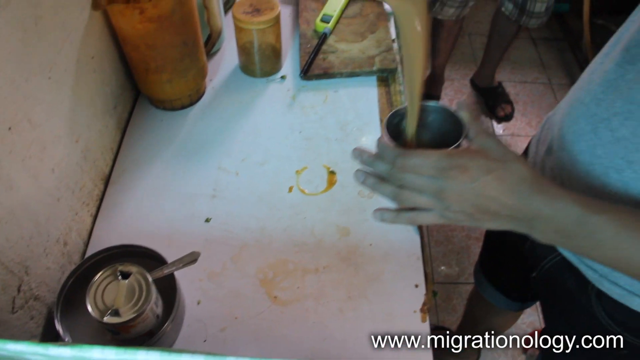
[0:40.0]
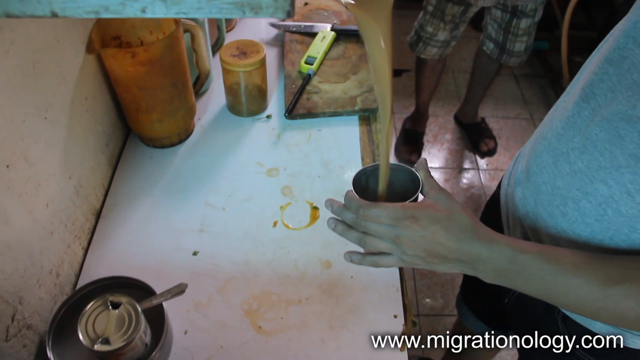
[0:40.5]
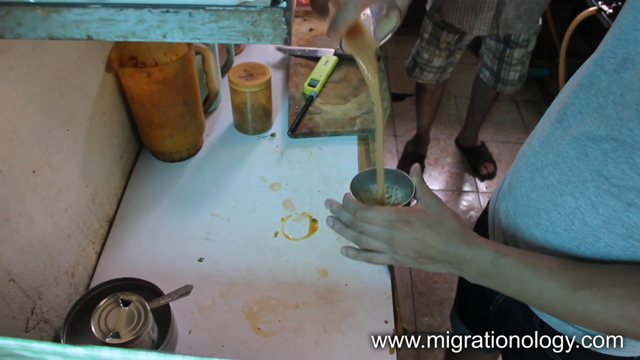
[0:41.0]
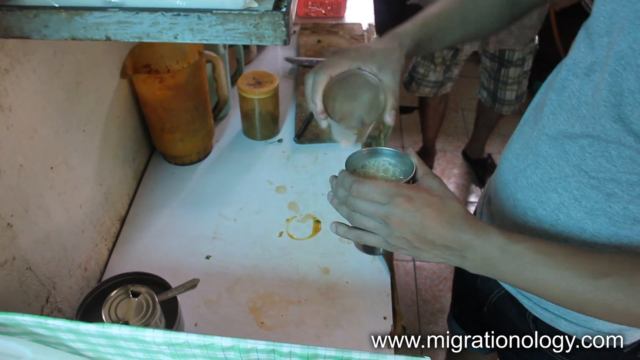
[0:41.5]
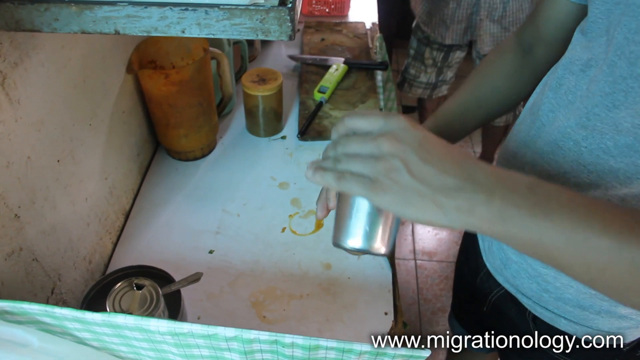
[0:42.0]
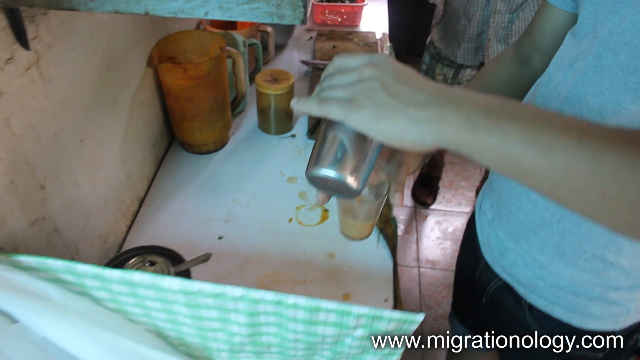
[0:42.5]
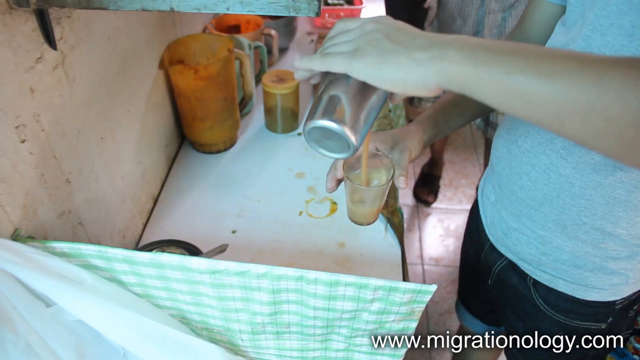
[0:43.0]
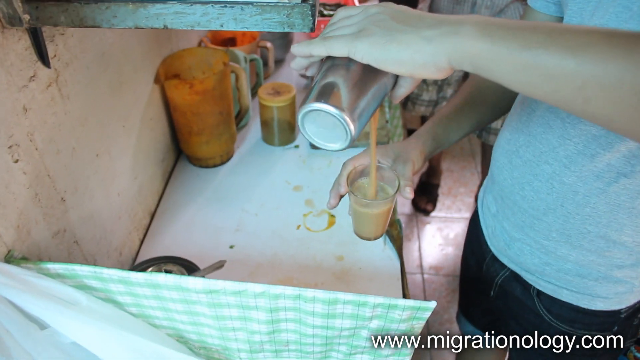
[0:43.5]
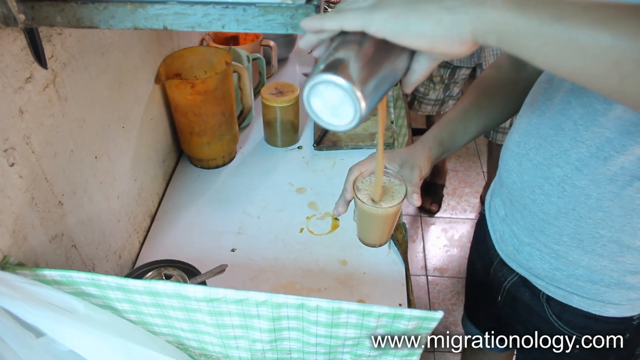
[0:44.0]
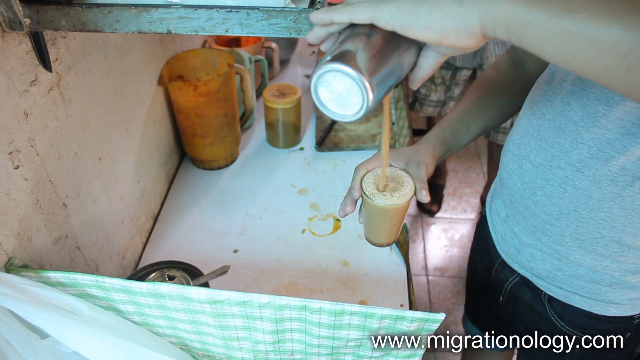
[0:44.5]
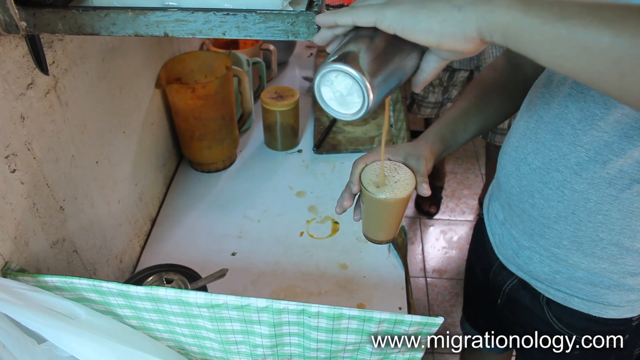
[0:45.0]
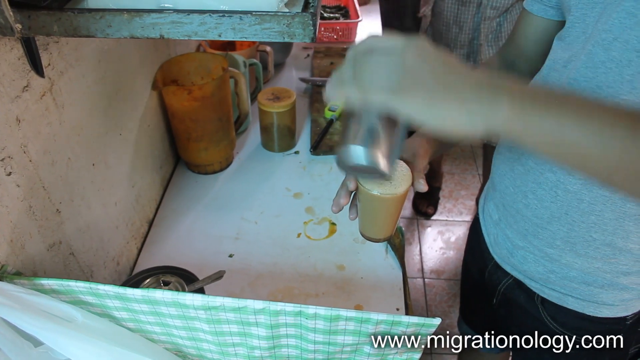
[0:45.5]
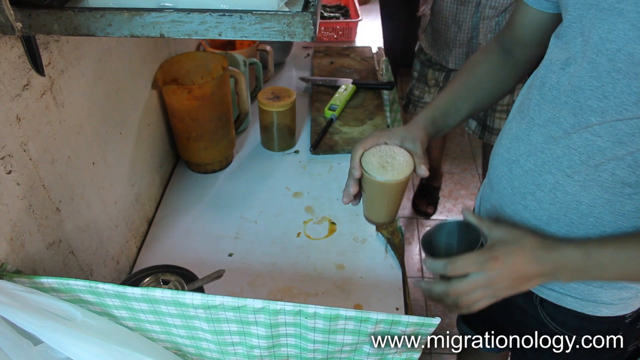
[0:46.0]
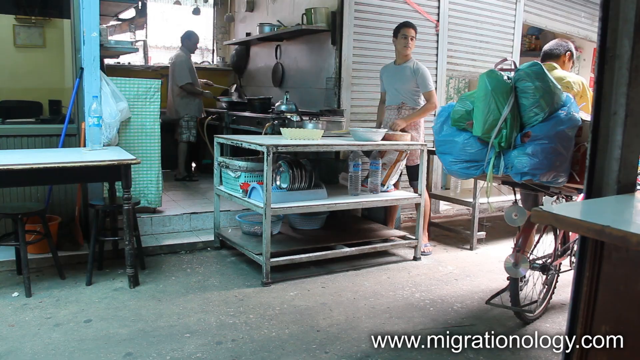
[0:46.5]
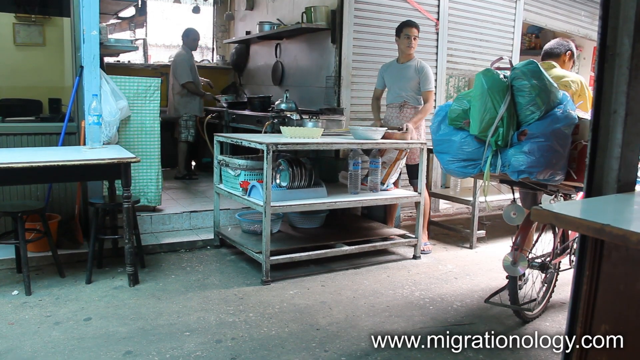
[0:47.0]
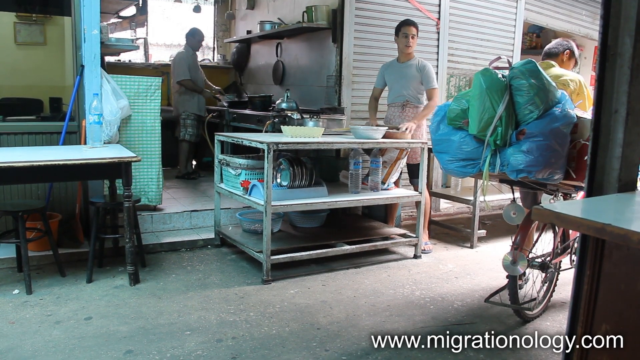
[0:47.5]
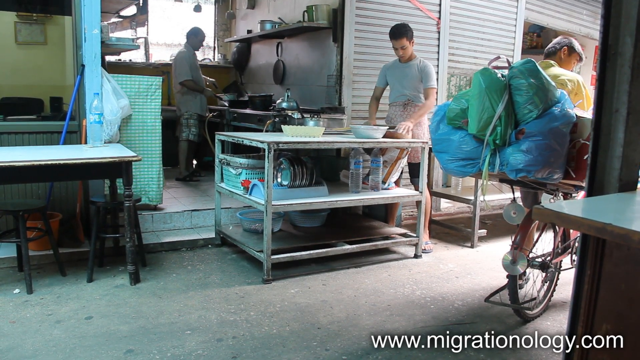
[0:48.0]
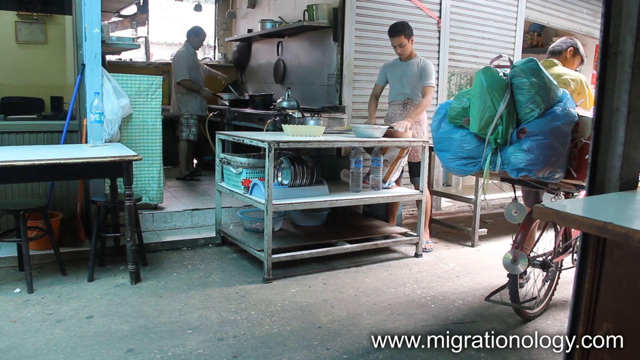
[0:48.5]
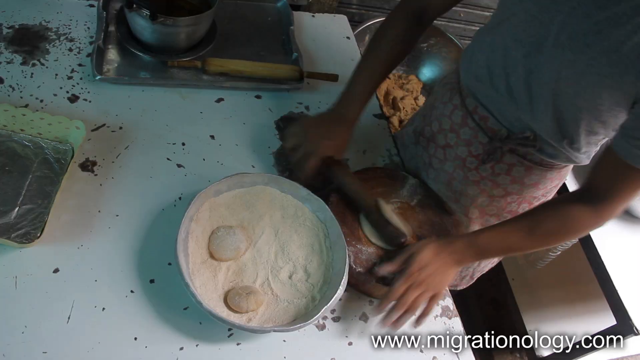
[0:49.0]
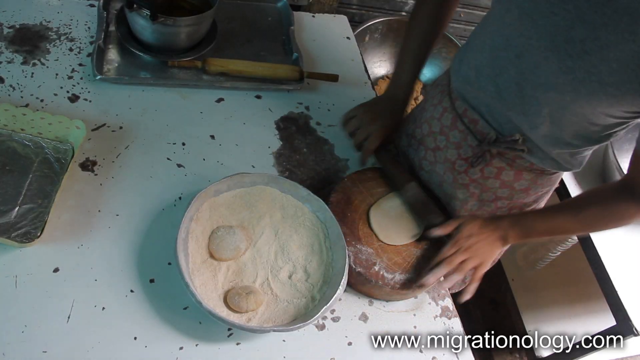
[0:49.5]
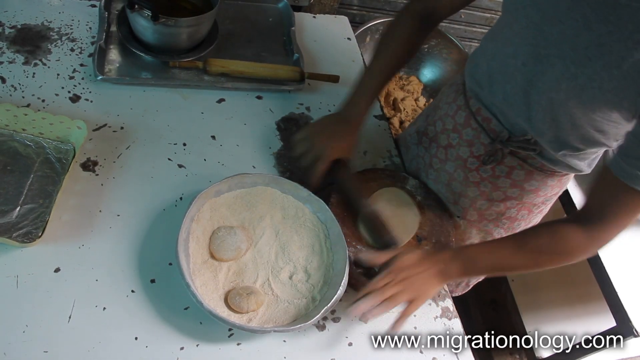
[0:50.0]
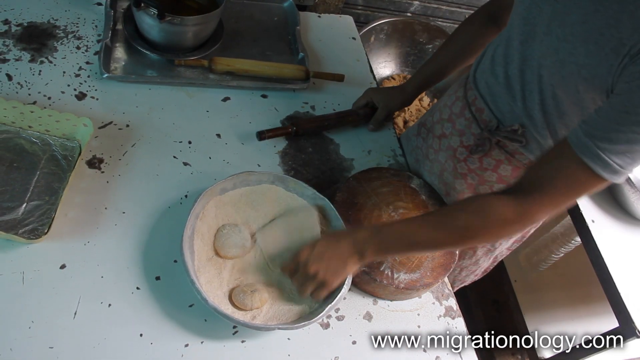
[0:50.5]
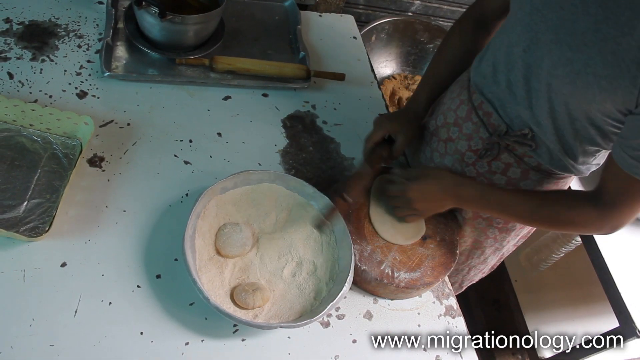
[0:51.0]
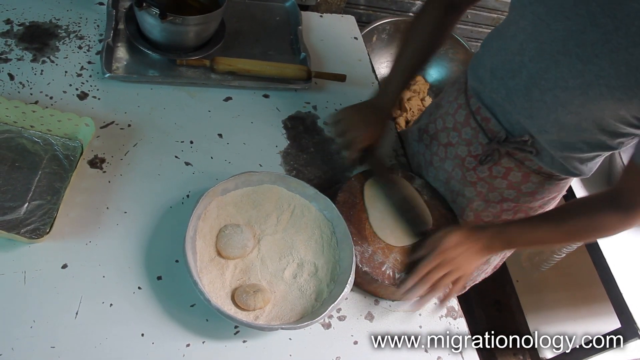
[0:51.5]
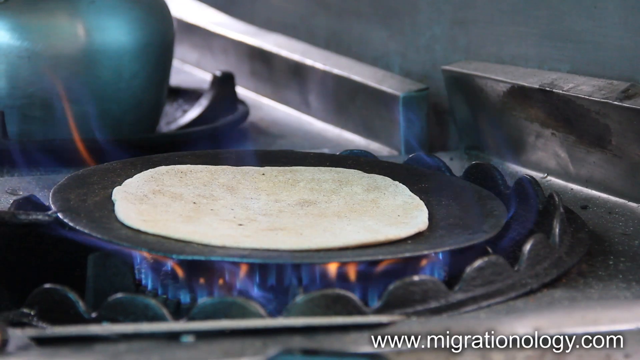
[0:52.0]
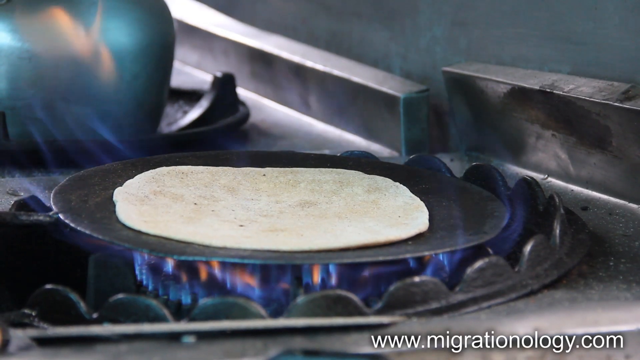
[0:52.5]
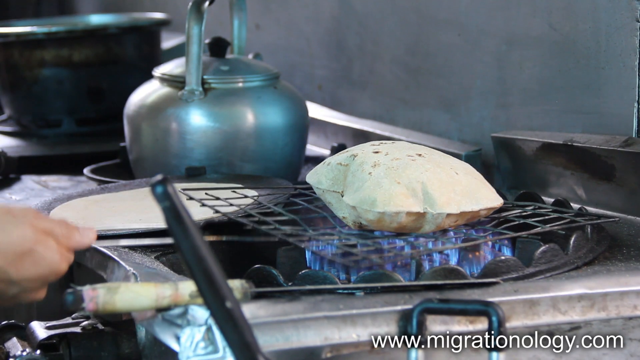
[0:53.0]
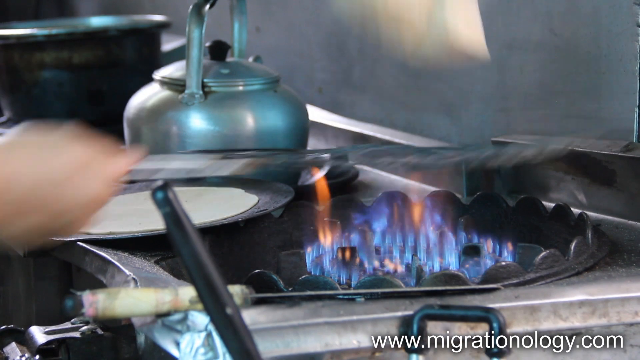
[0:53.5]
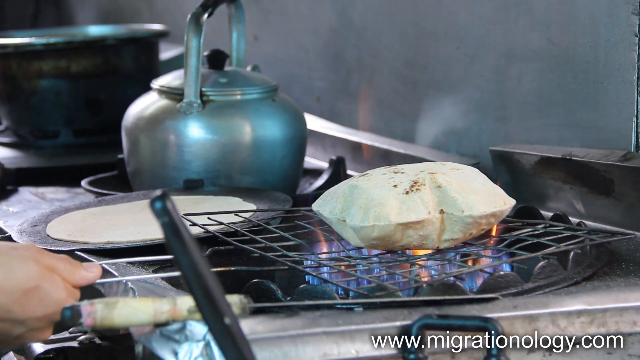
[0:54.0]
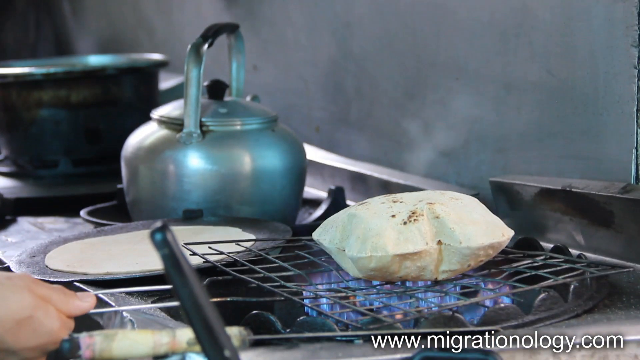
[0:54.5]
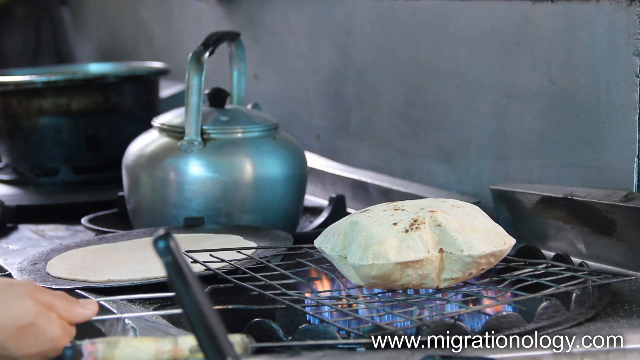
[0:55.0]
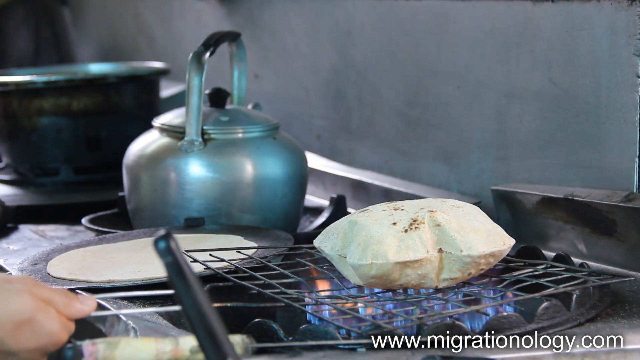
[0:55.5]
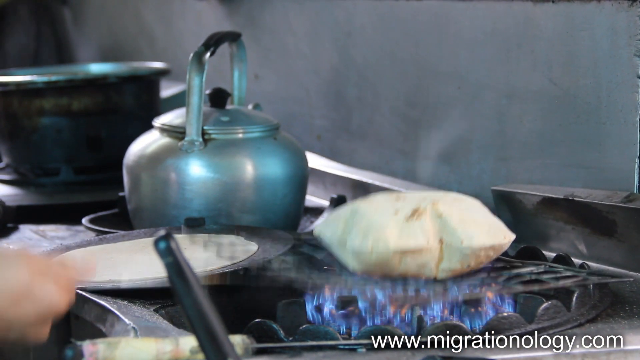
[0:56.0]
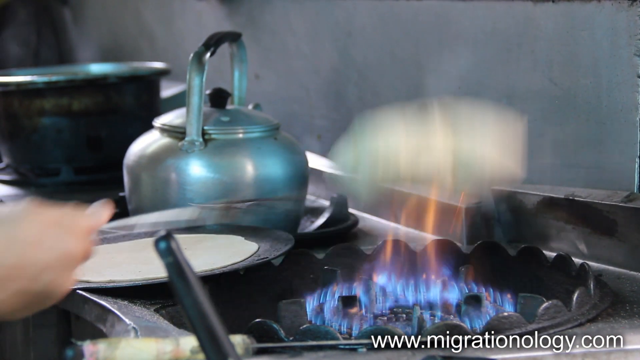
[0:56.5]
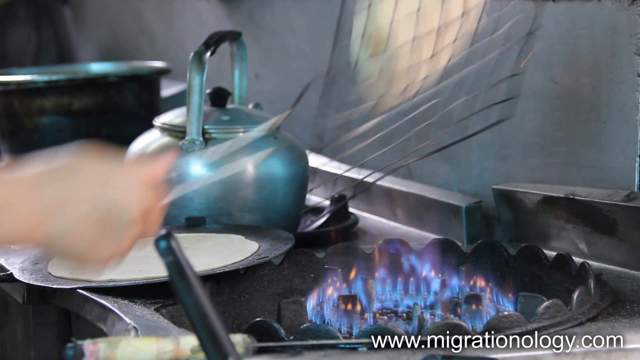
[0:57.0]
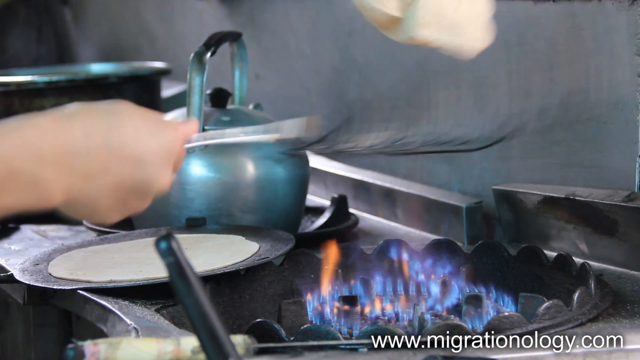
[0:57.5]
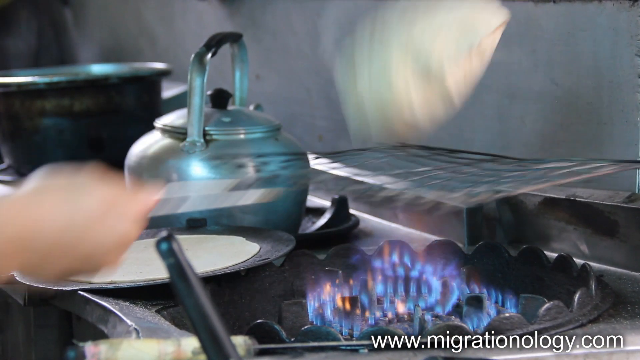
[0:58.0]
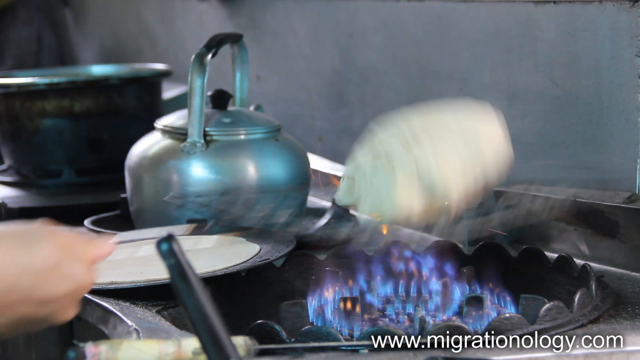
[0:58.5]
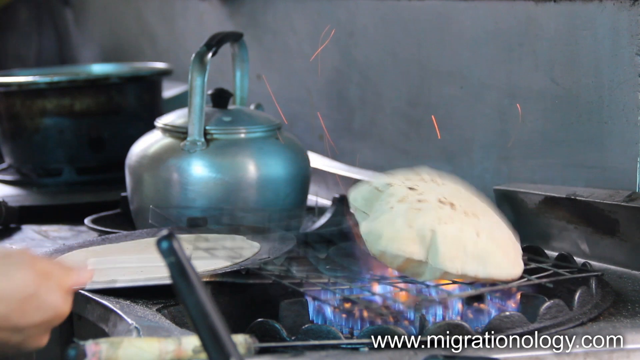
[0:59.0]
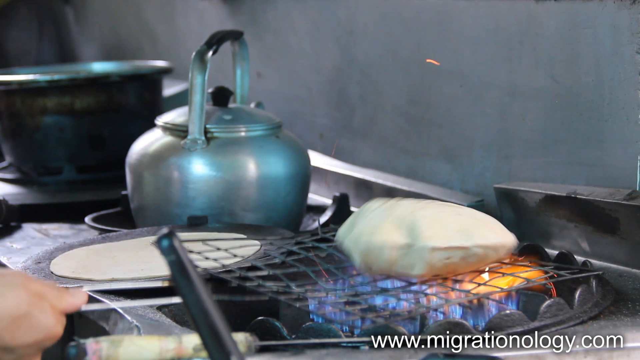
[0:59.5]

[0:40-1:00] A man pours liquid into a cup and then into an aluminum cup, back and forth. The video cuts to another man who kneads dough with a roller, making it very flat, then grills it over a straight flame on a completely open grill. The dough expands a lot, giving it a very fluffy texture. At the end, the video goes into slow motion as he flips the dough in the air over the flame.